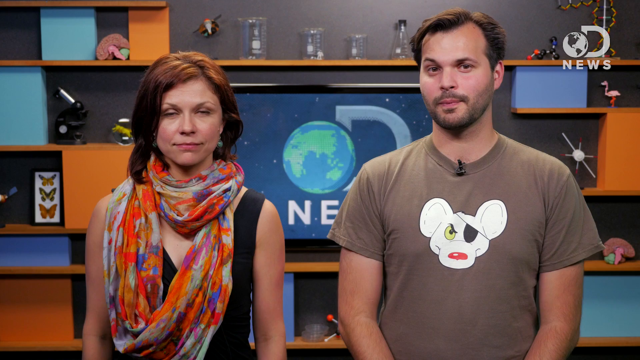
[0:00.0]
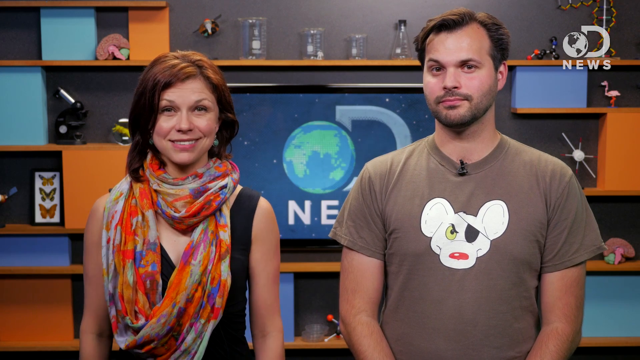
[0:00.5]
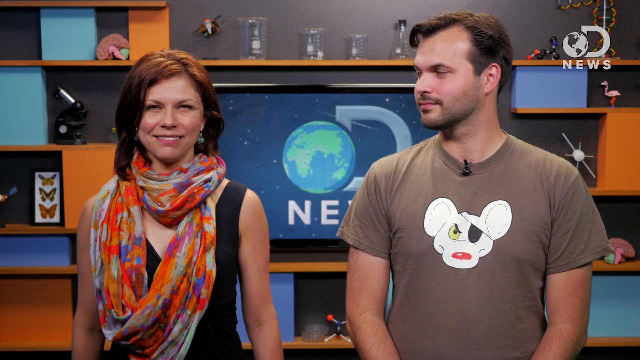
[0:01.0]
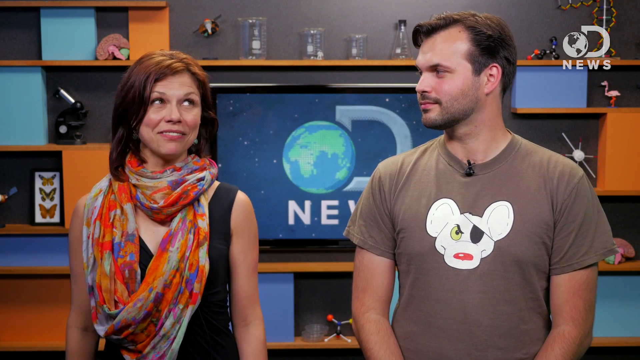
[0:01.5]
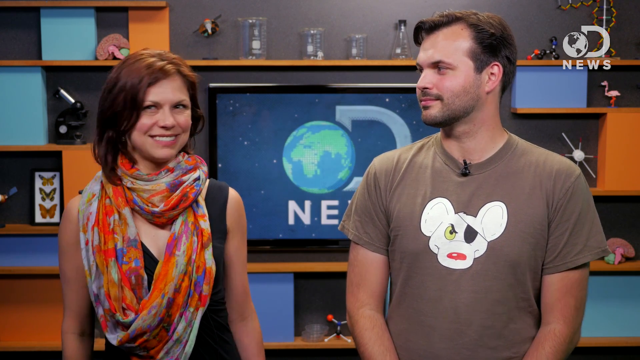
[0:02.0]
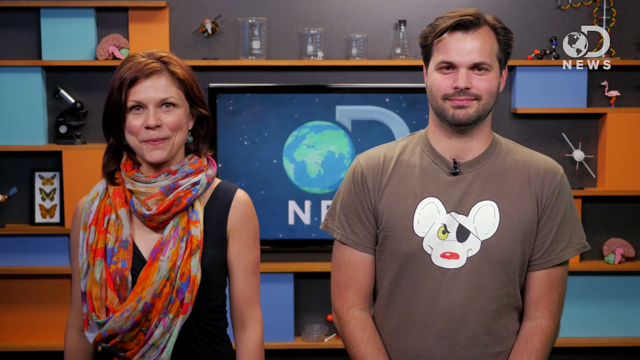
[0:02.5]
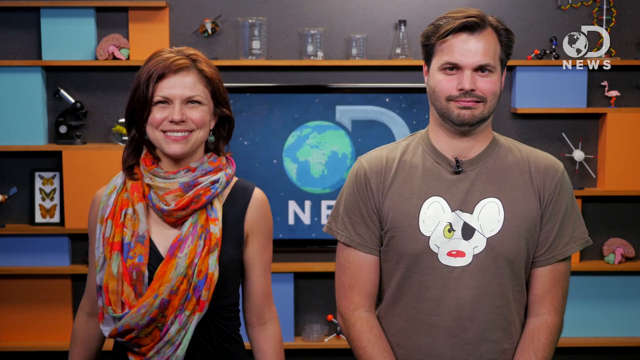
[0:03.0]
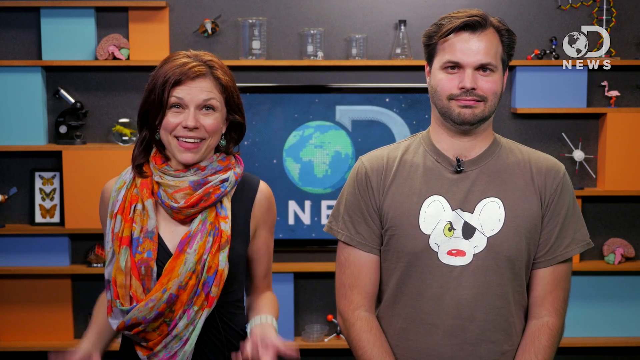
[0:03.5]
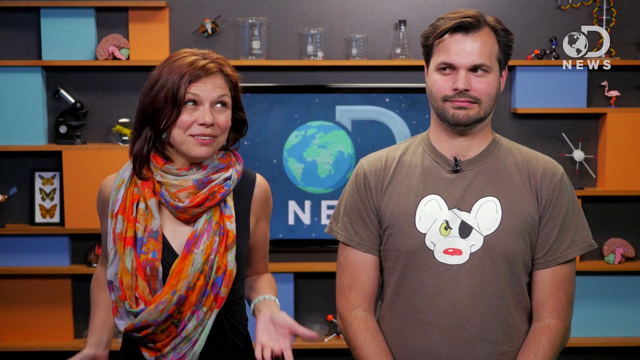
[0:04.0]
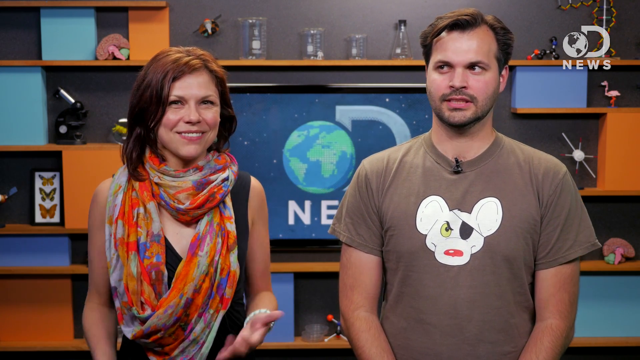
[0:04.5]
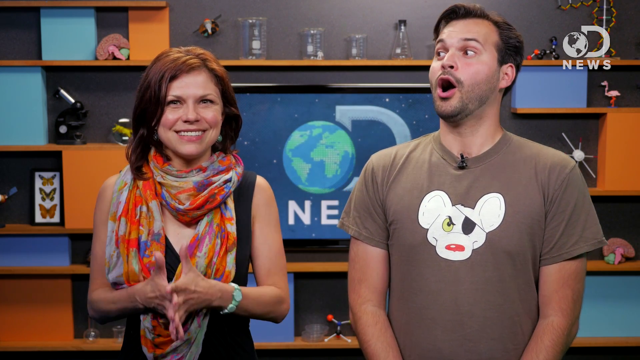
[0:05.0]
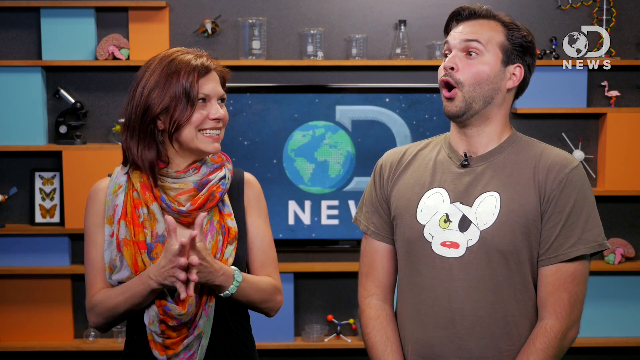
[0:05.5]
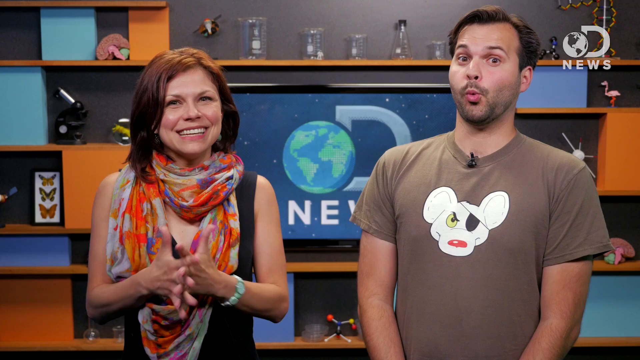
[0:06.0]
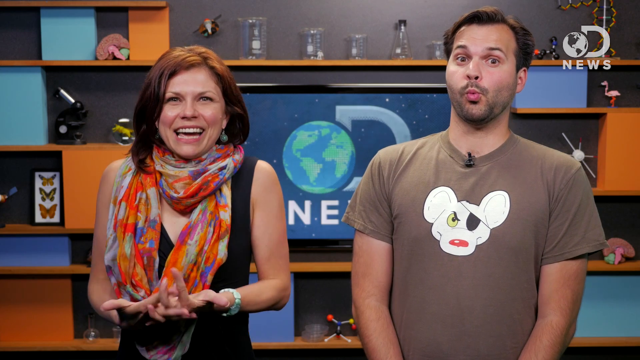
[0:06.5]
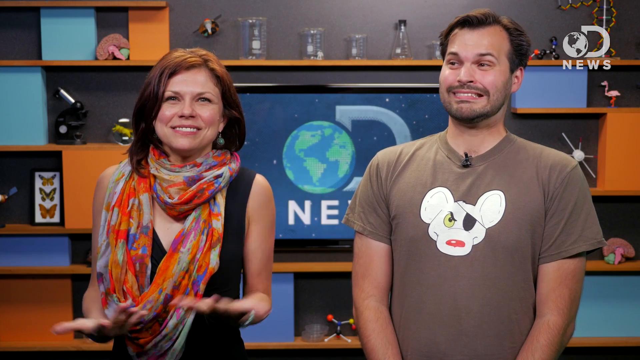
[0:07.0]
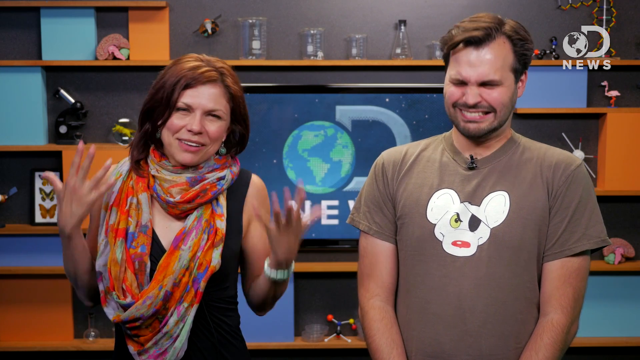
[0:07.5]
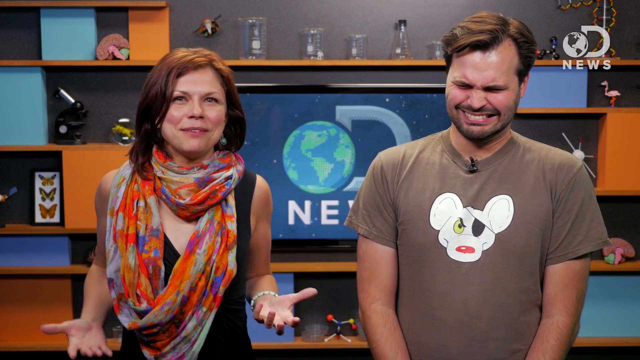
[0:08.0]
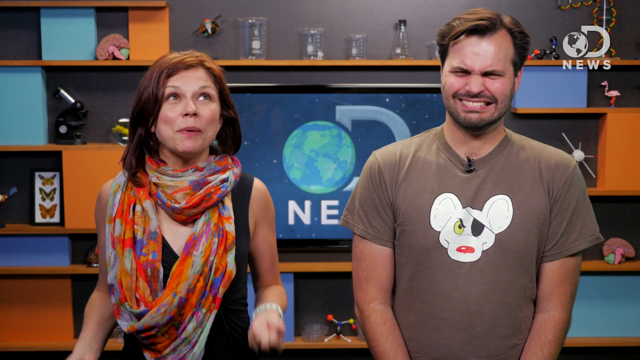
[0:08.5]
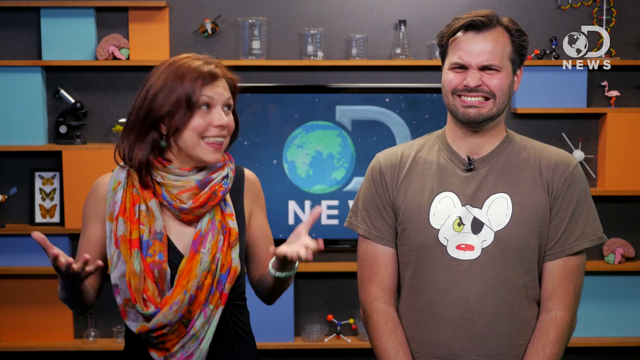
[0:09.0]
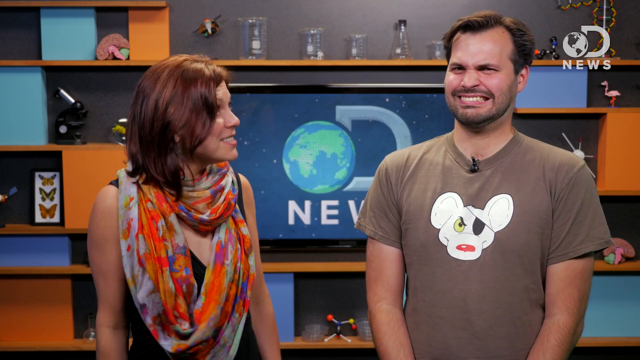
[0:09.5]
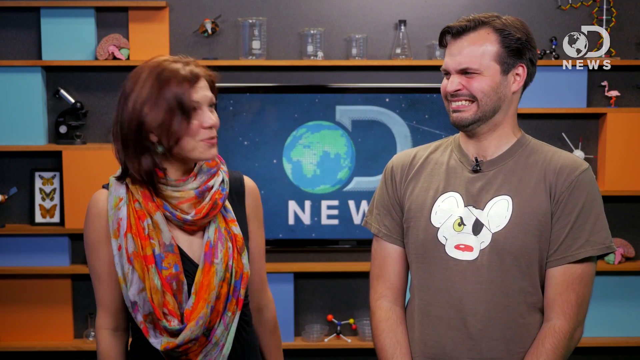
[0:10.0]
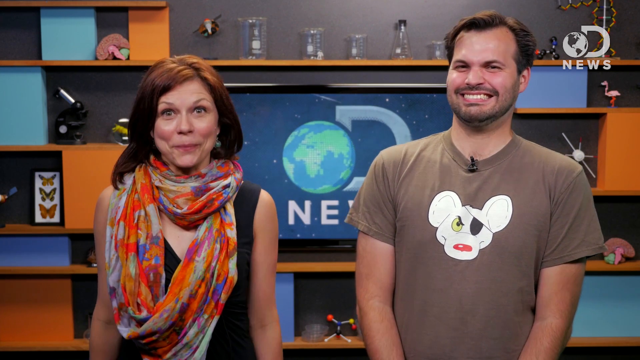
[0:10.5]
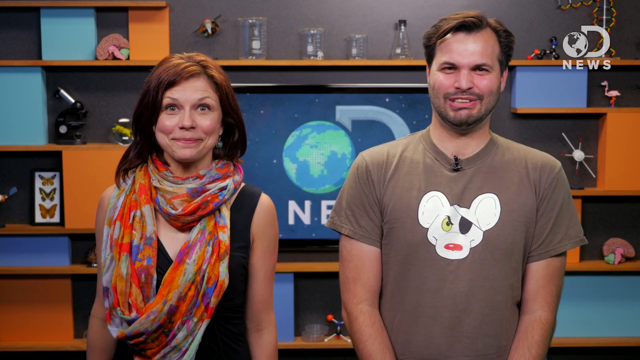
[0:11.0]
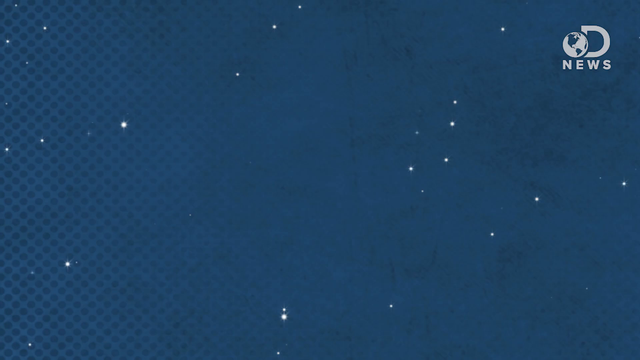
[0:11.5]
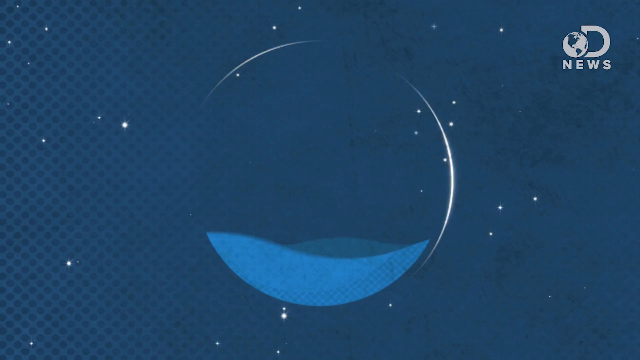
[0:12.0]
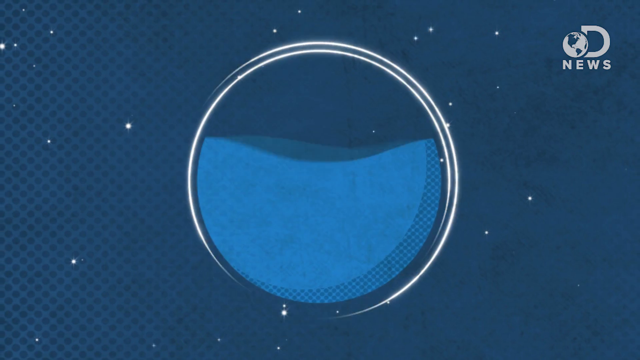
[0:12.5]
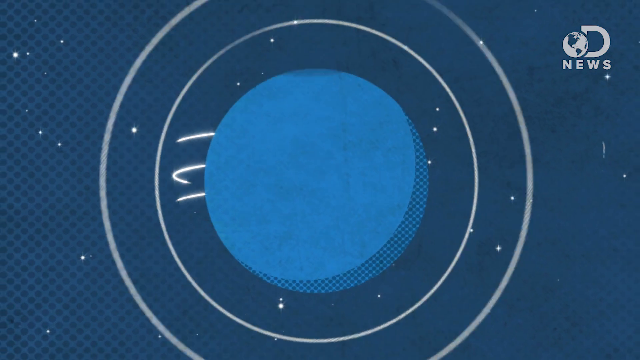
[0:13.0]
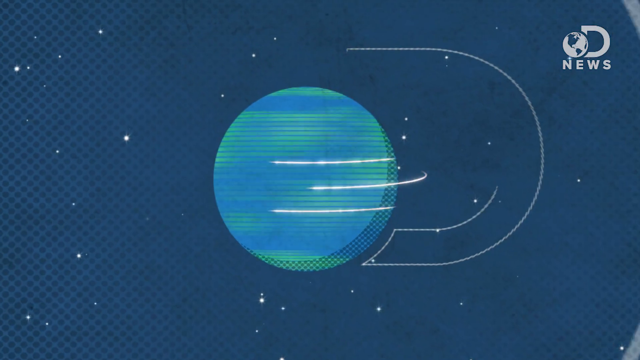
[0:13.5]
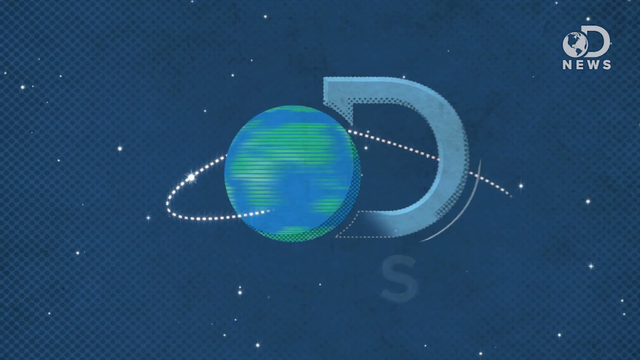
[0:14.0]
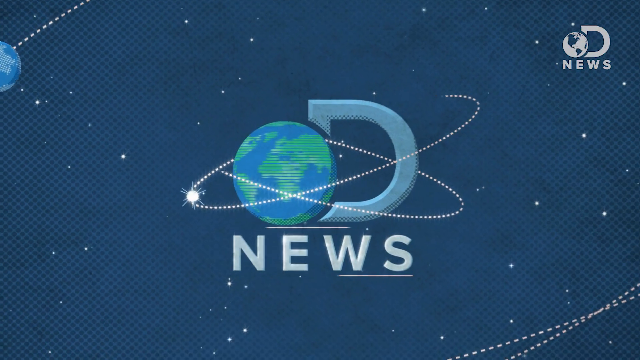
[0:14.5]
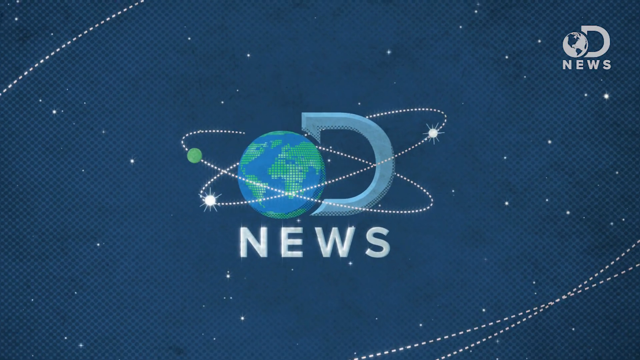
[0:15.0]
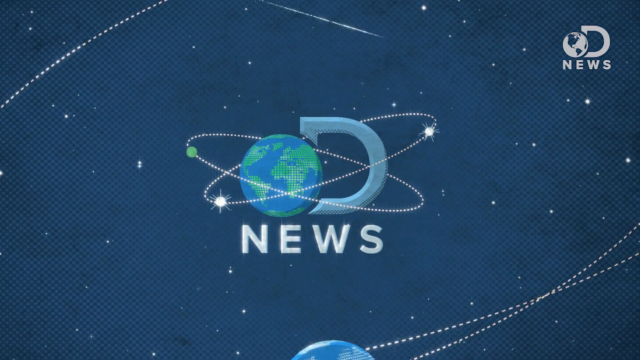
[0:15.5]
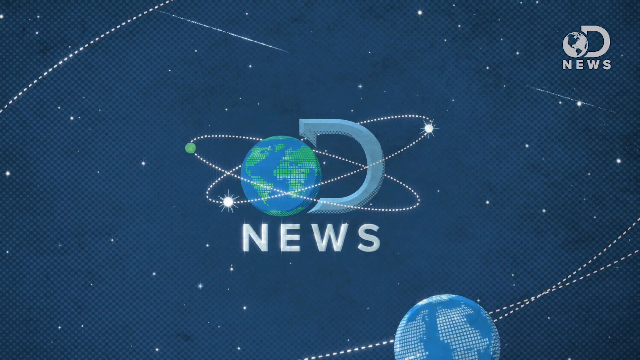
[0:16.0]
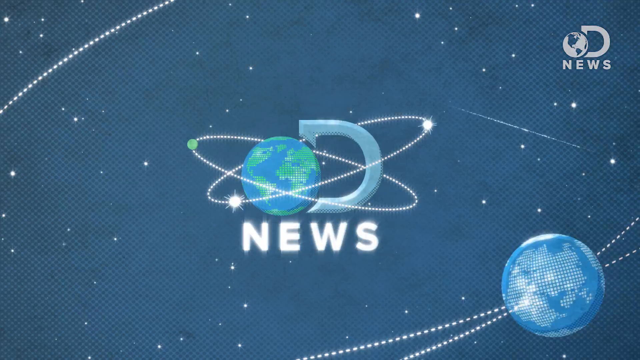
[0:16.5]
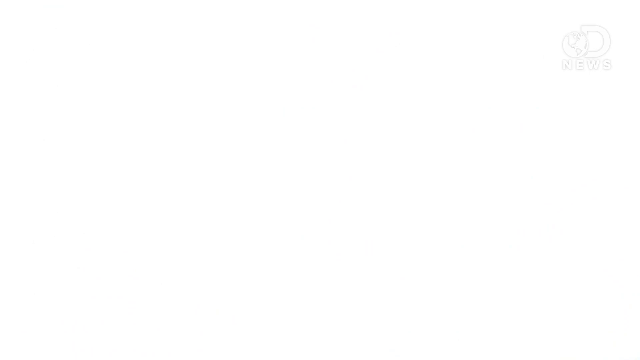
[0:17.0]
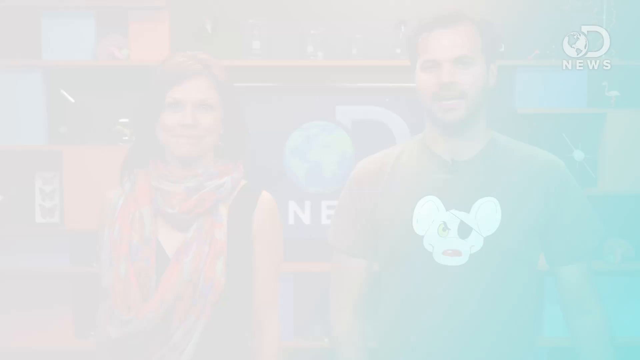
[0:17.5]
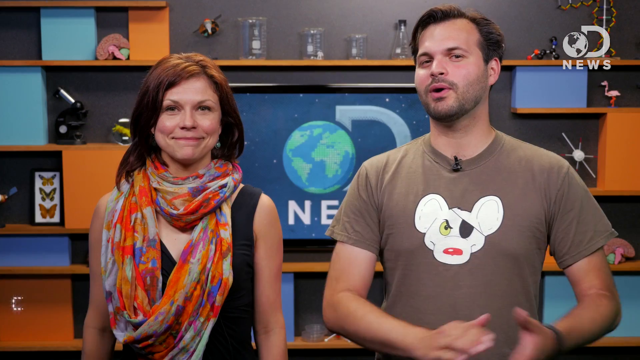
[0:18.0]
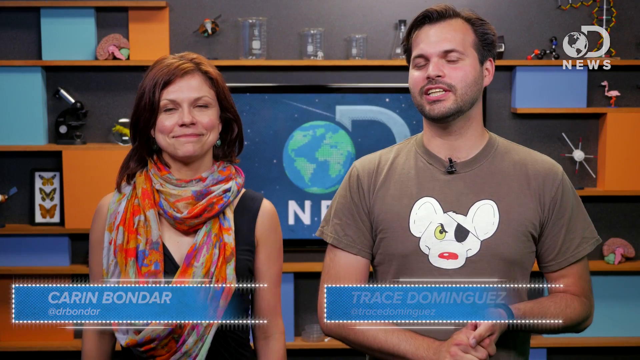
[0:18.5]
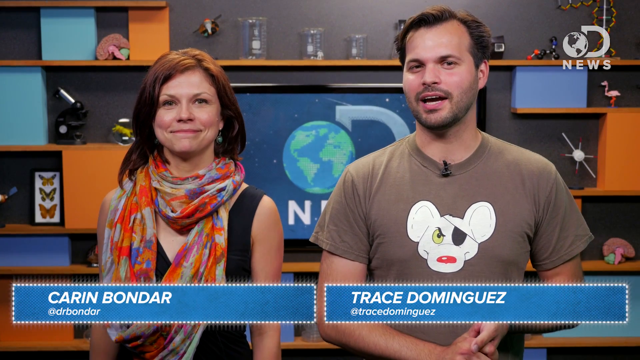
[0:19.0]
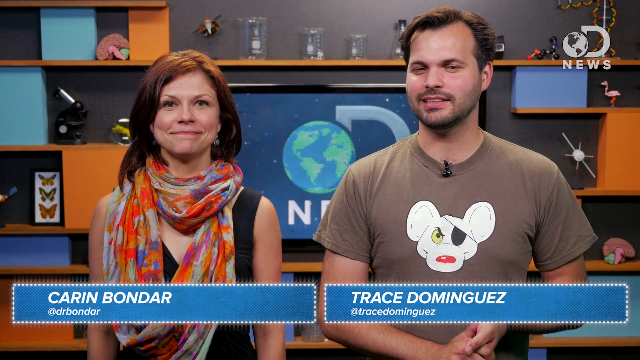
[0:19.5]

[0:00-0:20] The video could possibly be comedic internet news. It shows a man and a woman. One wears an almost gray shirt with a mouse on it that has one eye and a red nose. A monitor in the background has a globe on it that says "News." A lady with brown hair wears an orange and white scarf and a black shirt. The setting looks like science, with flasks in the background, and it looks more like comedy. She is smiling and bouncing around a lot. The man, who has a goatee and brown hair, is just standing there with a lot of enthusiasm on his face, kind of smiling a little. The video goes to a computer graphic of a round white circle with blue in the center, which could be representing water. Stars come out of it, and it turns into the Earth with "the news" on it. Then it returns to the two people: Caren Bondar is the woman and Trace Dominicas is the man. The colors are blues, blacks and grays, with a little white and some orange in the background.